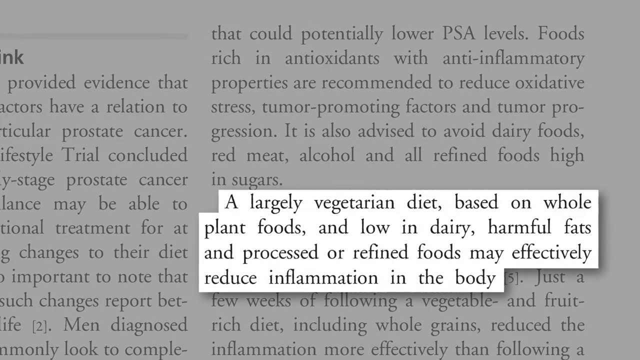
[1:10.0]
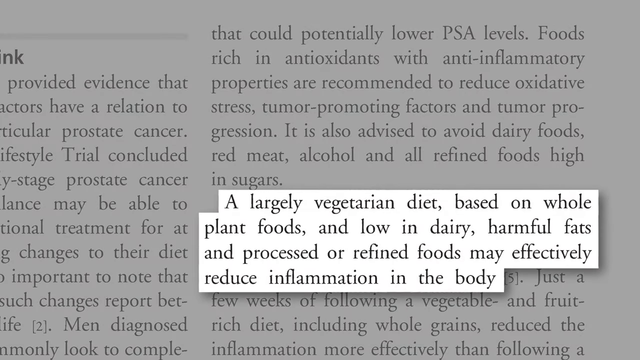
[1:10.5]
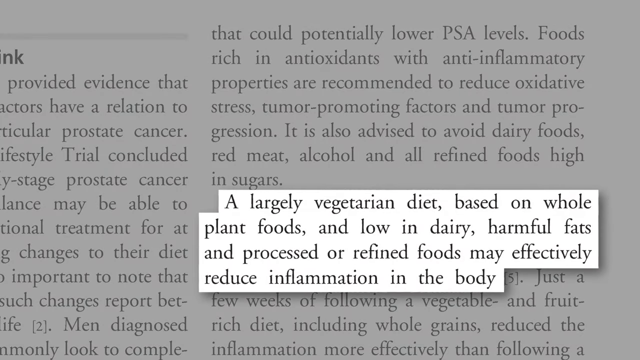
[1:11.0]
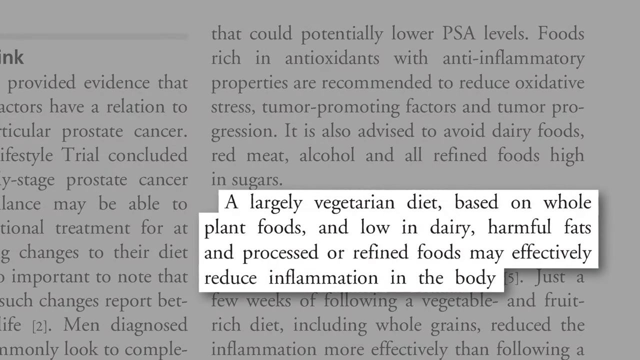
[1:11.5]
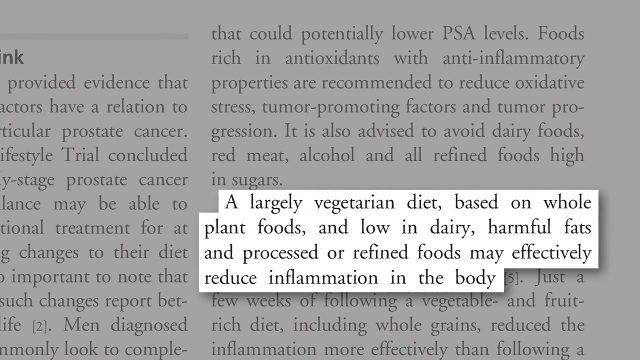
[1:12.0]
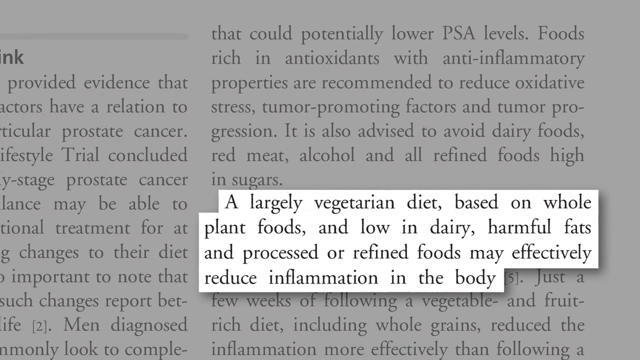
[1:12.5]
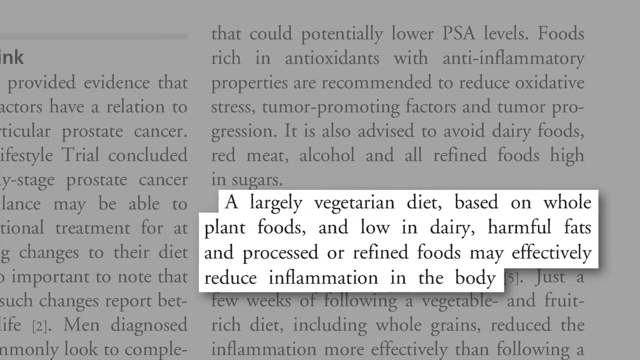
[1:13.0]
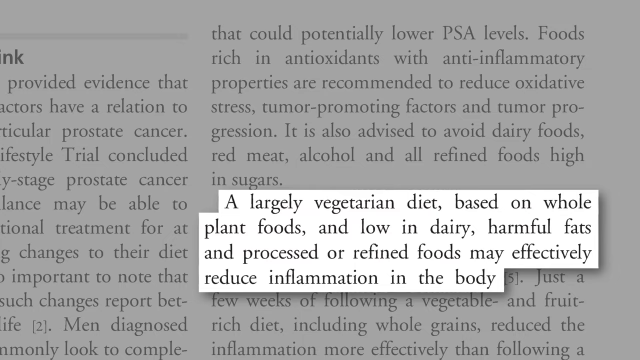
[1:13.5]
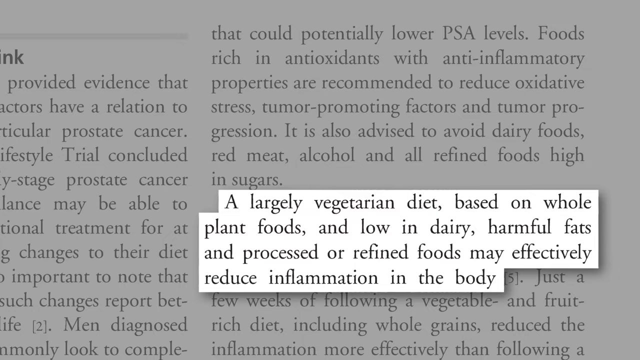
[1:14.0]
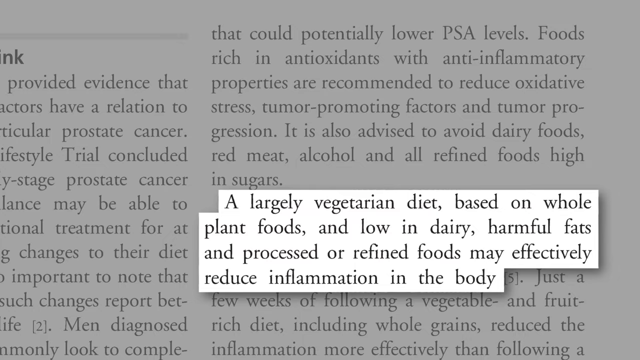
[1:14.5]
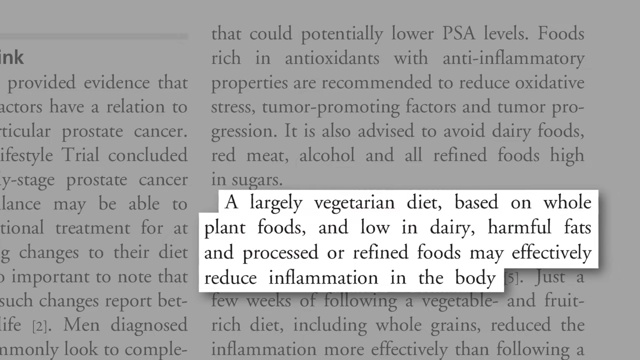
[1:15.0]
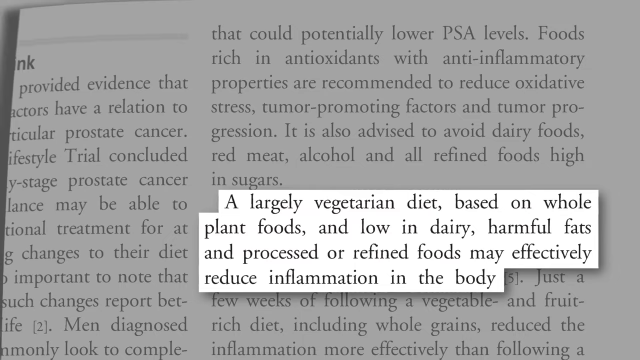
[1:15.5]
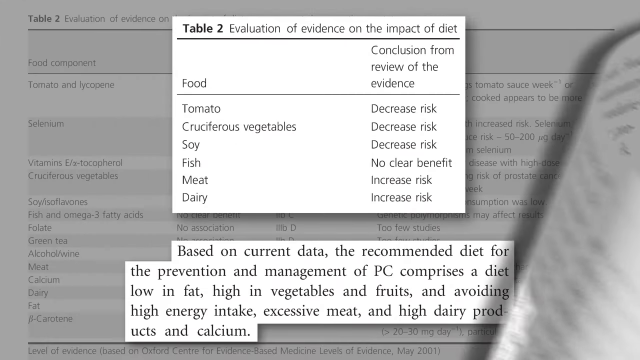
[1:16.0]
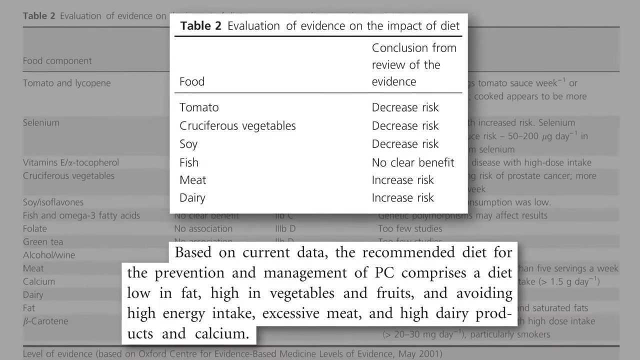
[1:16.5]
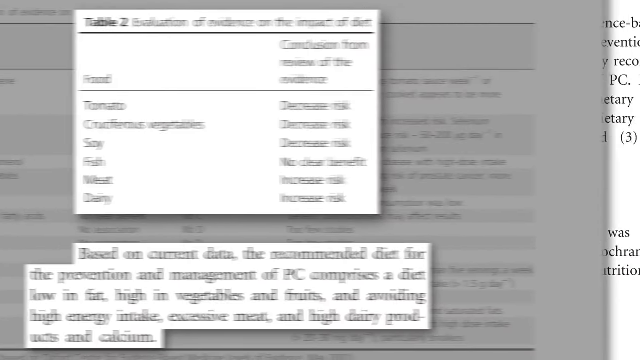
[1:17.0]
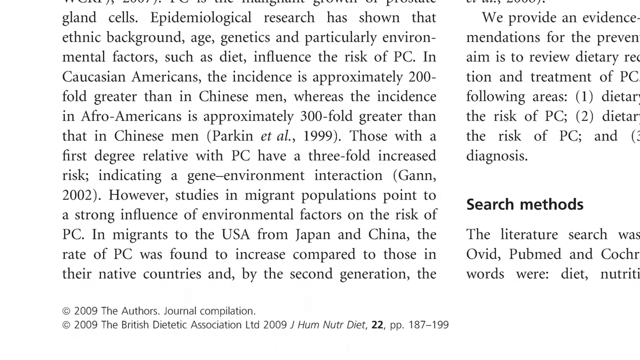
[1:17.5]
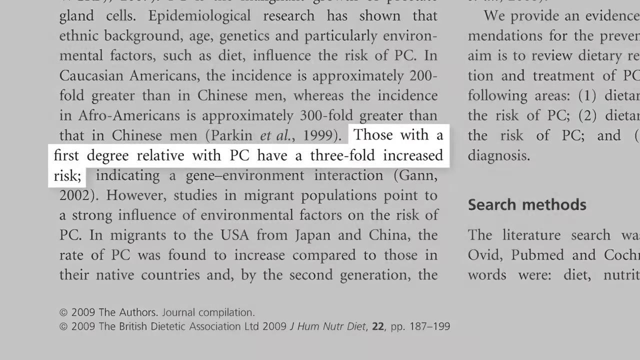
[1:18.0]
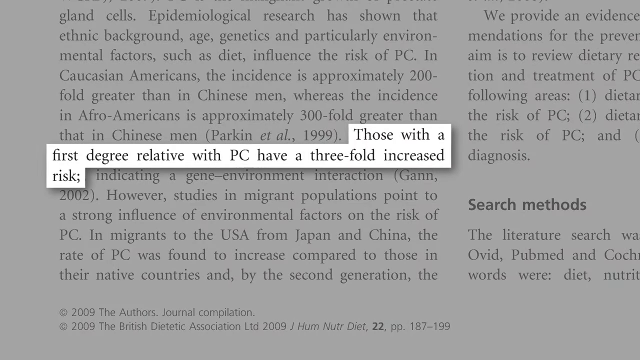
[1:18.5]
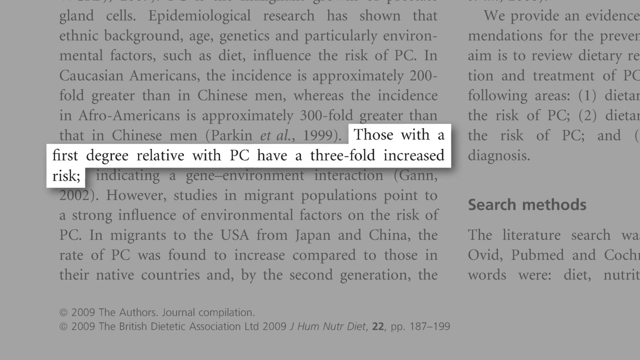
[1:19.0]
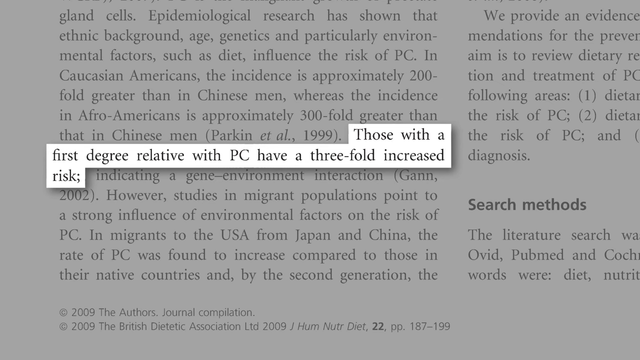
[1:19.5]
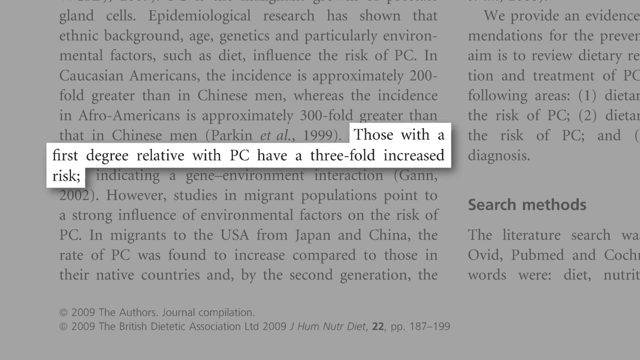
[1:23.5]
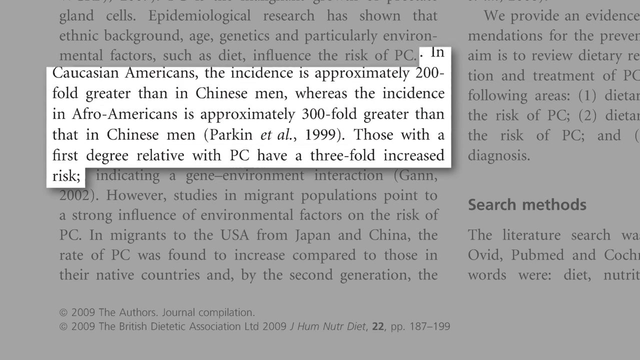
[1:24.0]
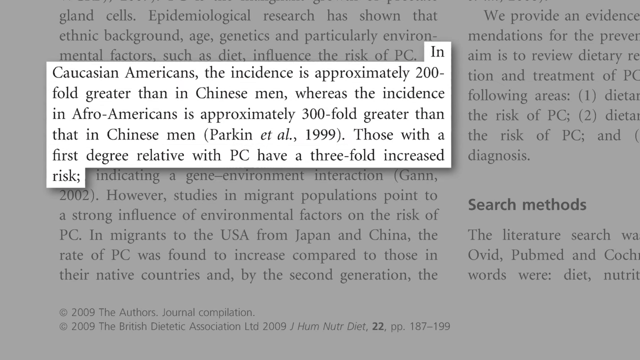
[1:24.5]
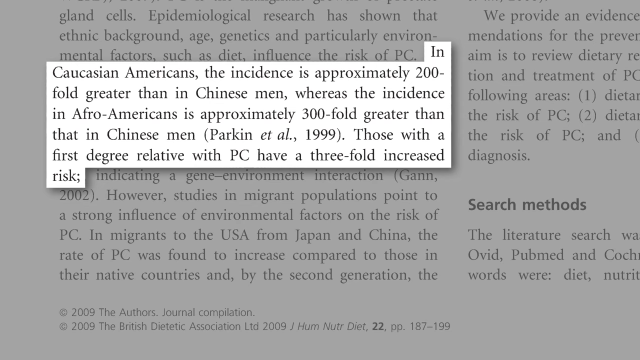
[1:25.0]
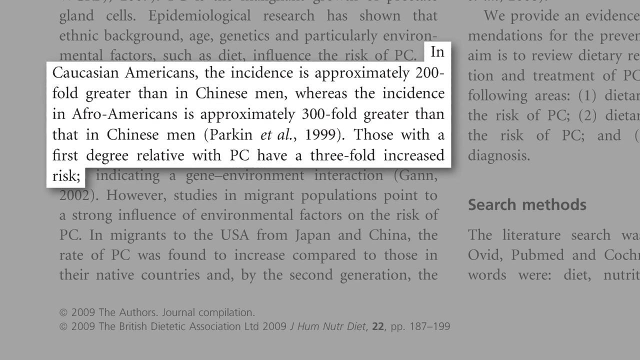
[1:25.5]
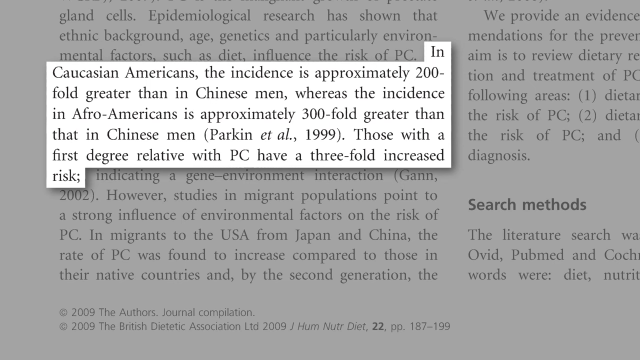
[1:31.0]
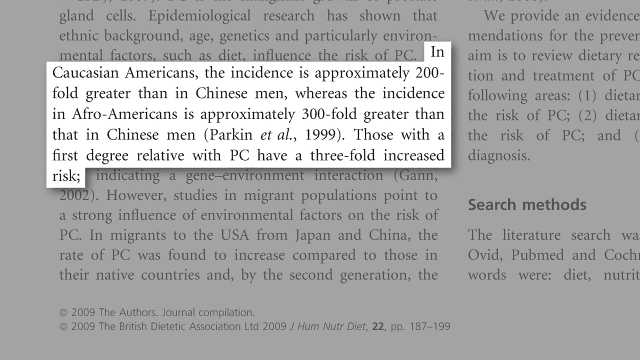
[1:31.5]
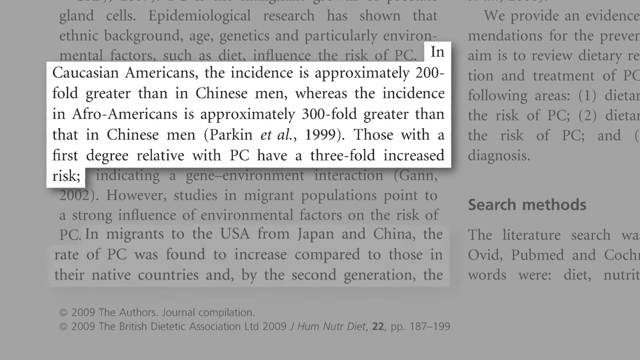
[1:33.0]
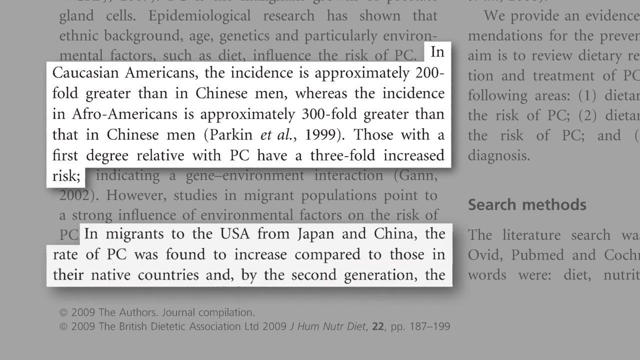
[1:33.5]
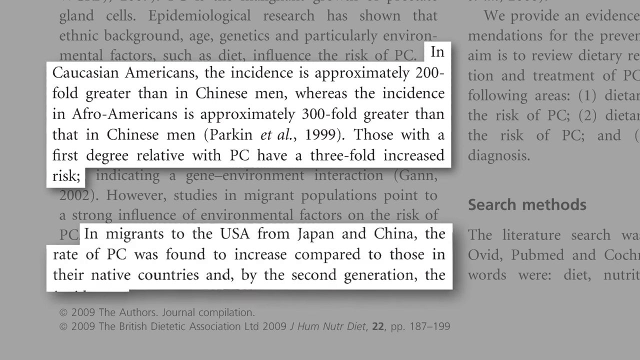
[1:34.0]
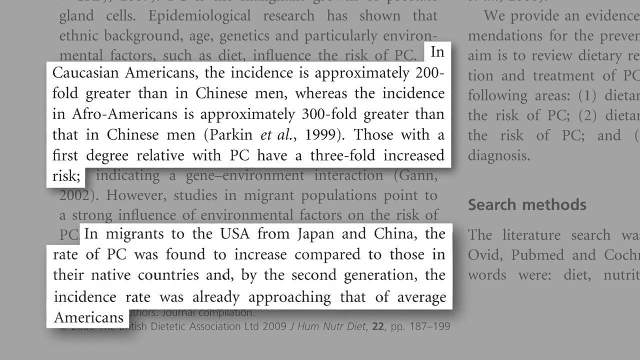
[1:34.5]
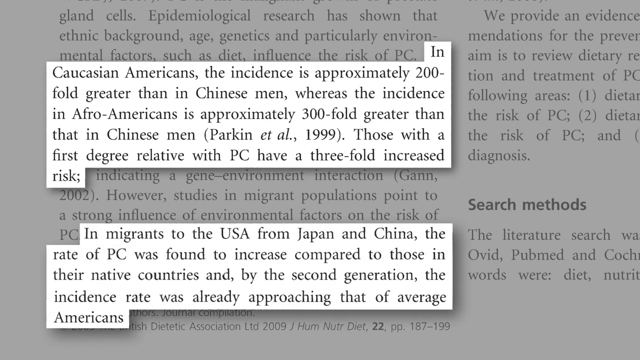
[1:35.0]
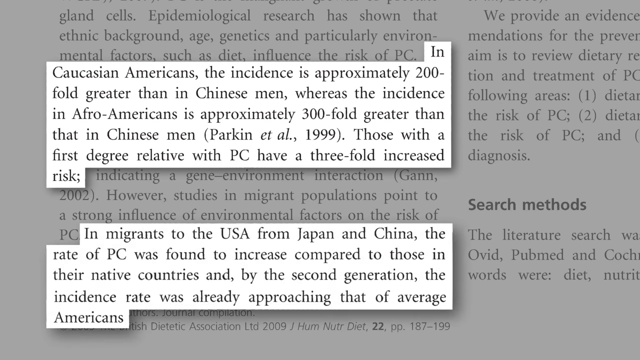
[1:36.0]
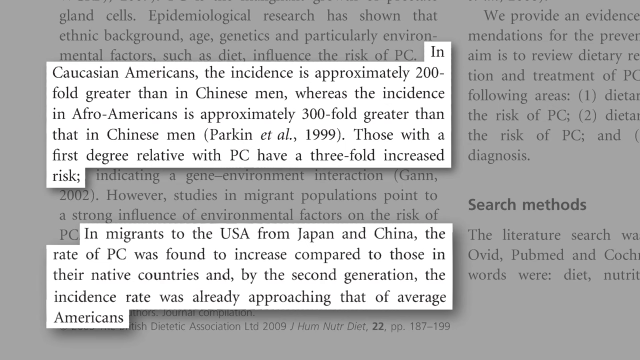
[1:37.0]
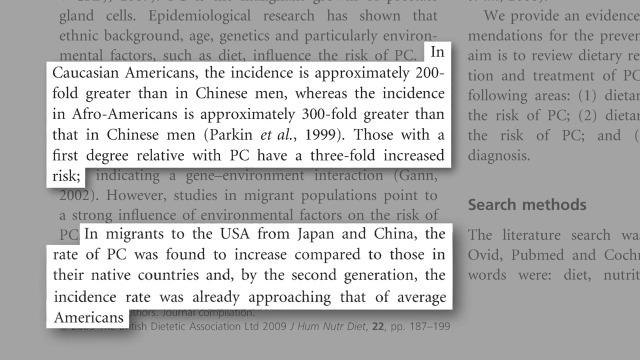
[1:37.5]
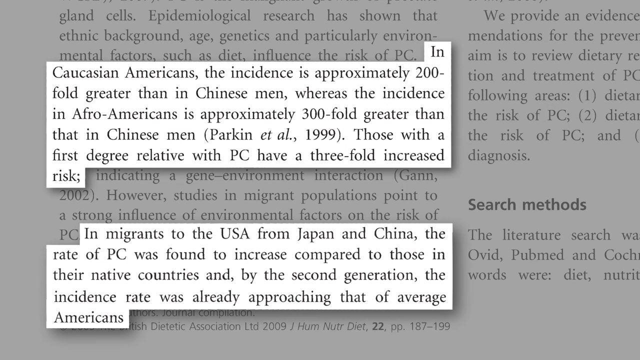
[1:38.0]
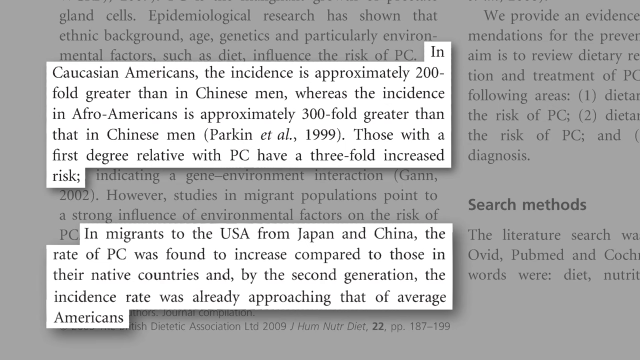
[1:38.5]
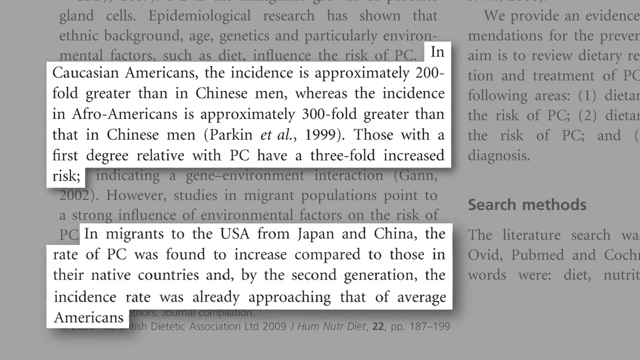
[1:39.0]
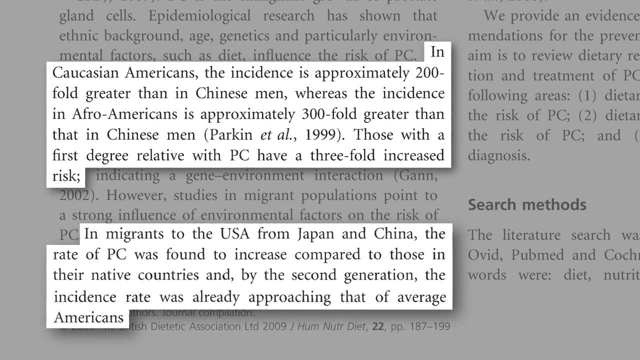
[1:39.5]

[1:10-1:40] The video returns to "Table 2: Evaluation of evidence on the impact of diet", with the same information: tomato, cruciferous vegetables and soy decrease risk, meat and dairy increase risk, and fish has no clear benefit. The same cutout text apparently remains. Next comes a close-up of a paragraph reading "Epidemiological research has shown that ethnic background, age, genetics and particularly environmental factors such as diet influence the risk of prostate cancer. In Caucasian Americans the incidence is approximately 200 fold greater than in Chinese men, whereas the incidence in African Americans is approximately 300 fold greater than in Chinese men," cited to Parkin, 1999. A highlighted cutout portion stands out, reading "Those with a first degree relative with prostate cancer have a three-fold increased risk." Another cutout reads "In migrants to the United States from Japan and Canada, the rate of PC was found to increase compared to those in their native countries, and by the second generation, the incidence rate was already approaching that of average Americans."